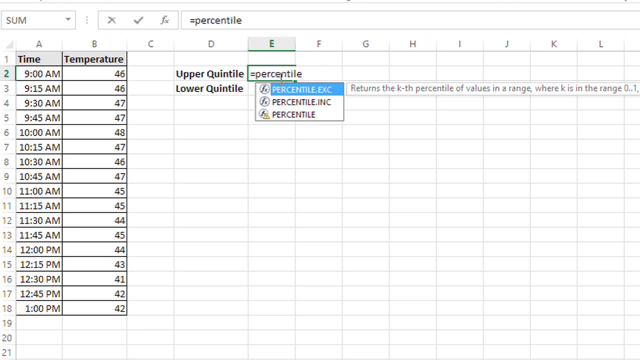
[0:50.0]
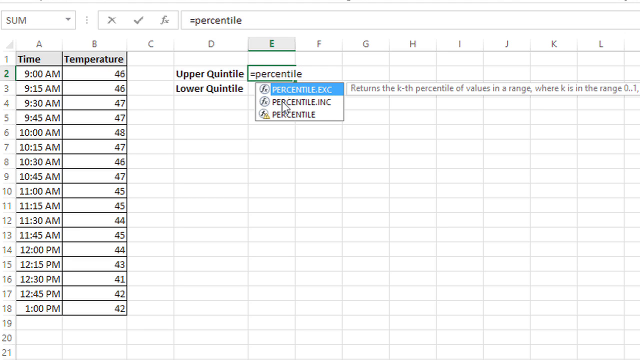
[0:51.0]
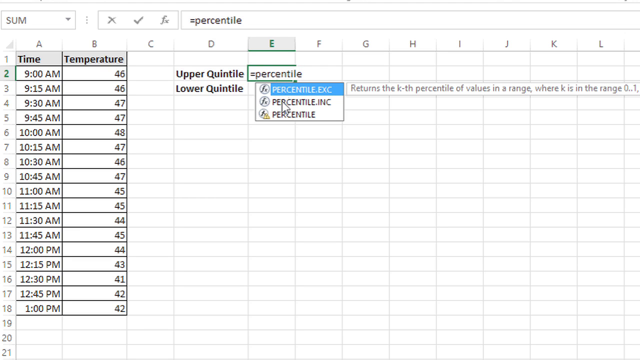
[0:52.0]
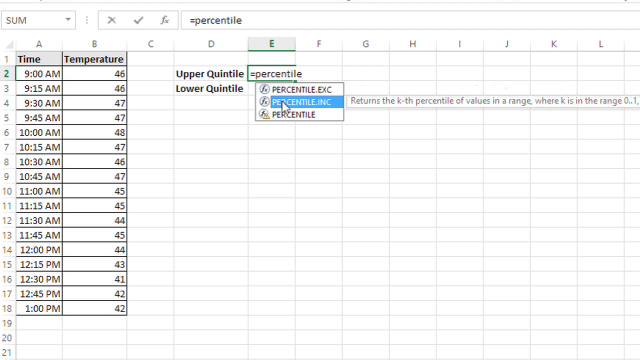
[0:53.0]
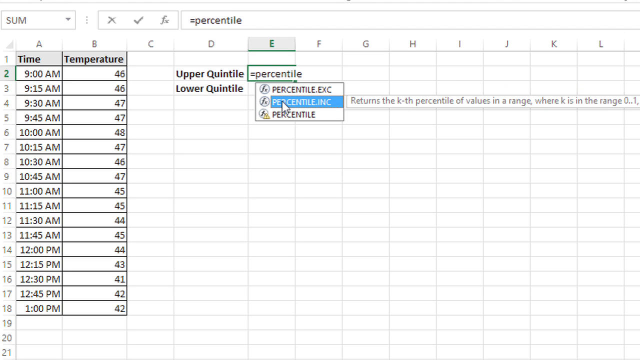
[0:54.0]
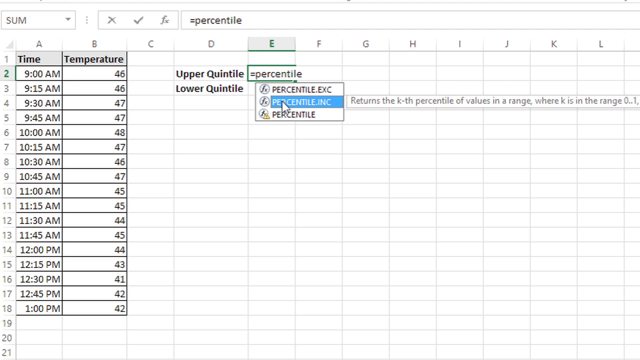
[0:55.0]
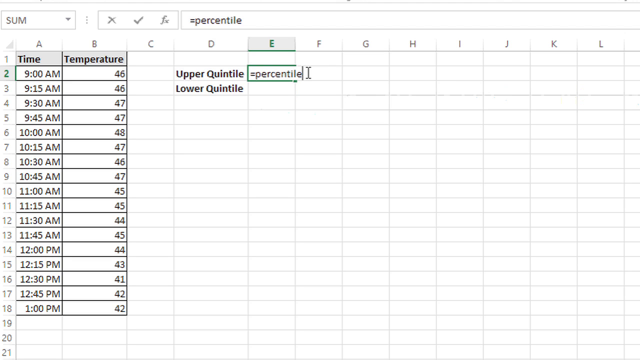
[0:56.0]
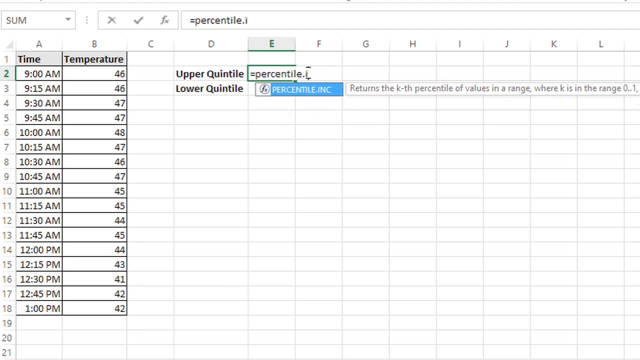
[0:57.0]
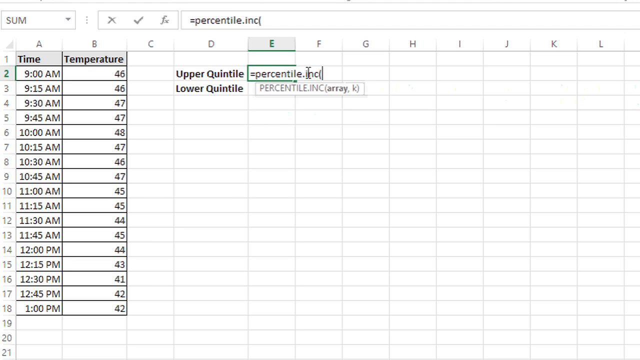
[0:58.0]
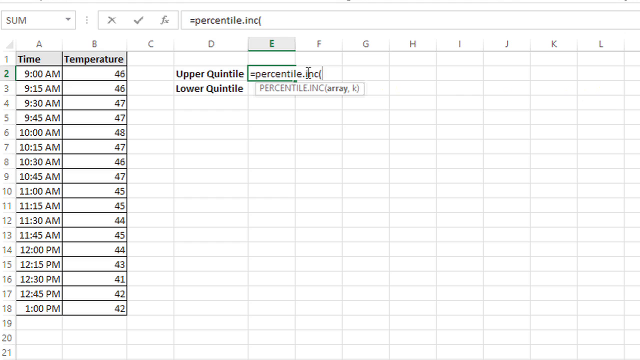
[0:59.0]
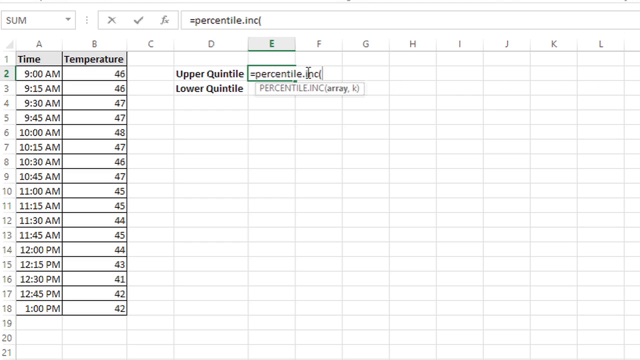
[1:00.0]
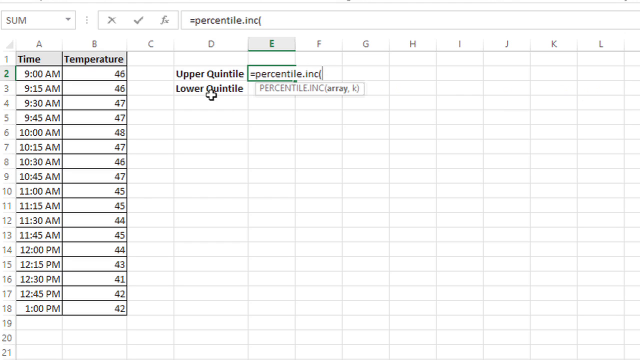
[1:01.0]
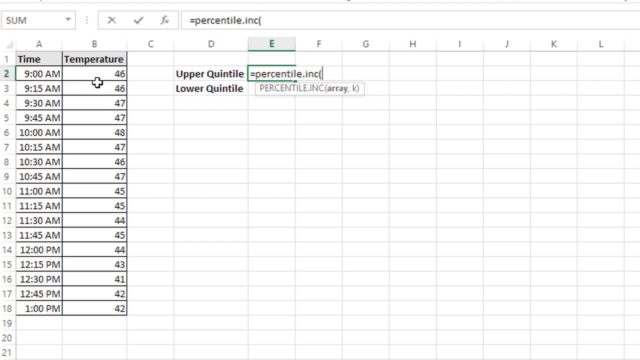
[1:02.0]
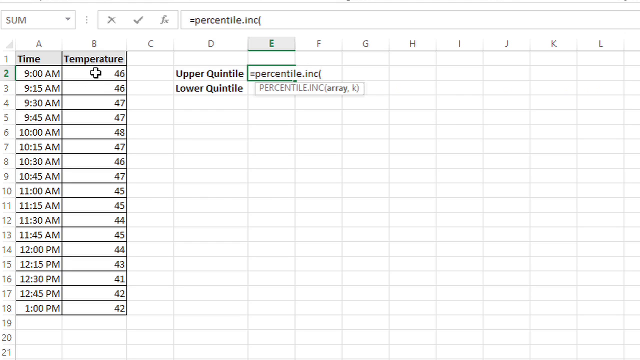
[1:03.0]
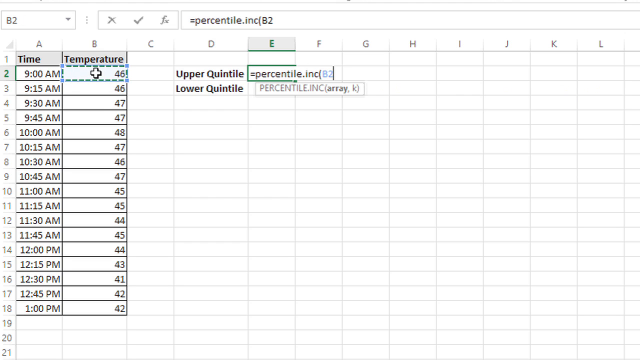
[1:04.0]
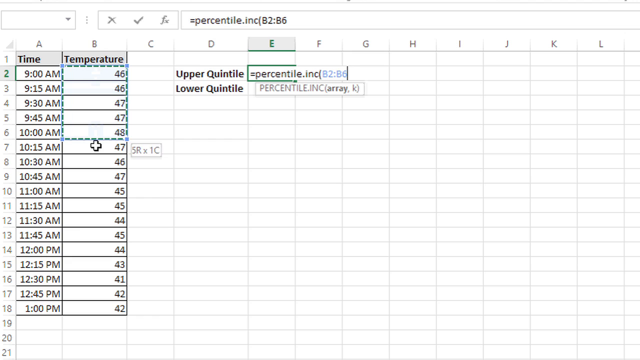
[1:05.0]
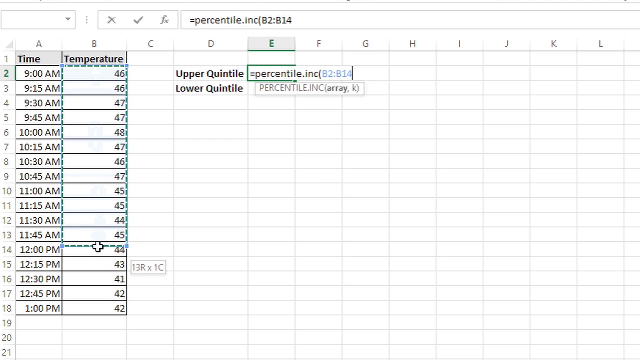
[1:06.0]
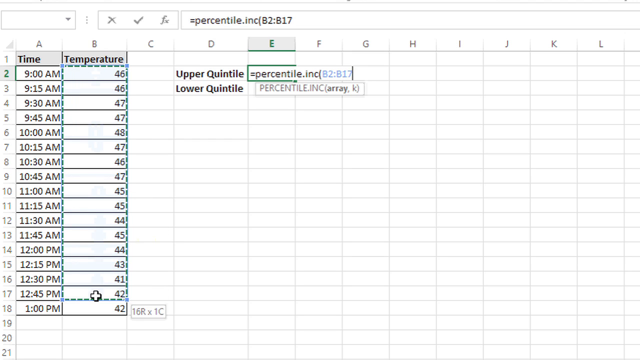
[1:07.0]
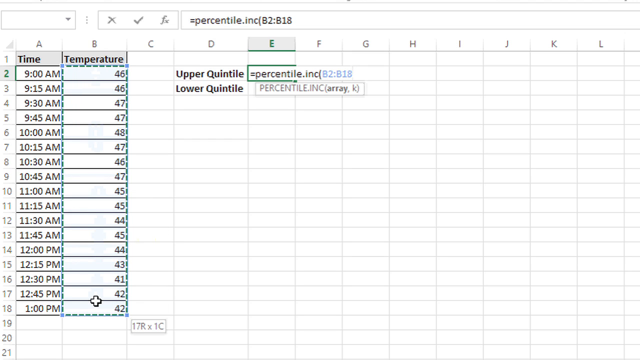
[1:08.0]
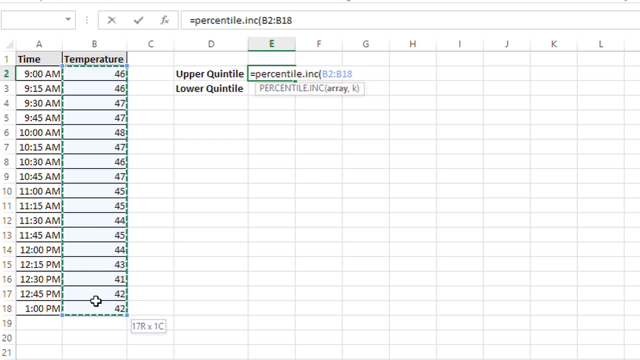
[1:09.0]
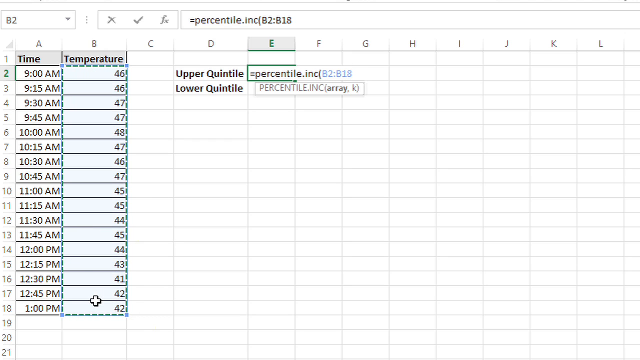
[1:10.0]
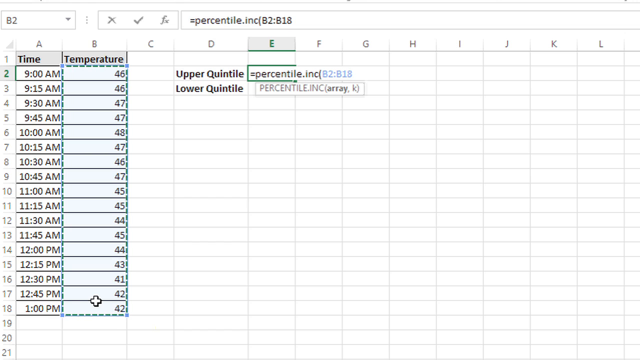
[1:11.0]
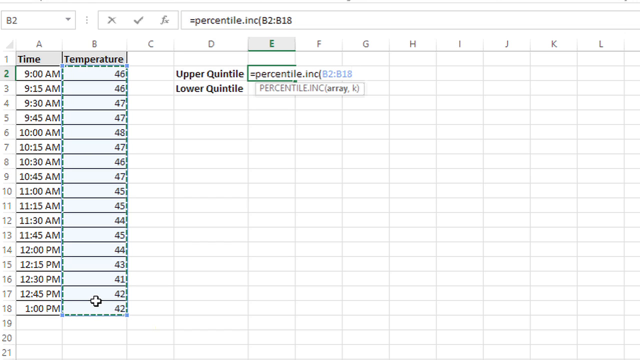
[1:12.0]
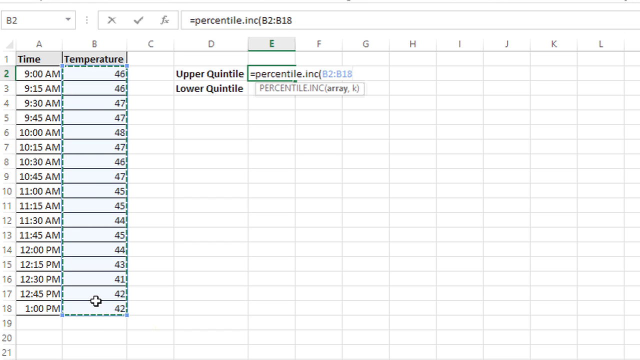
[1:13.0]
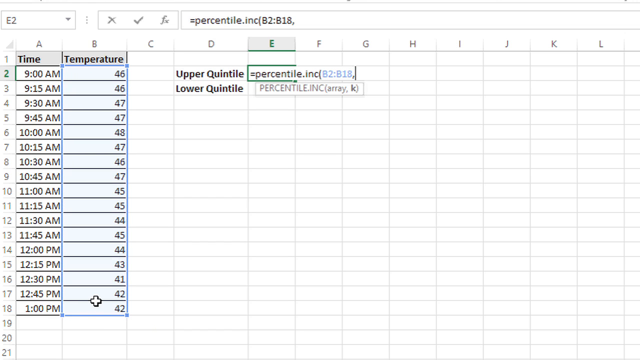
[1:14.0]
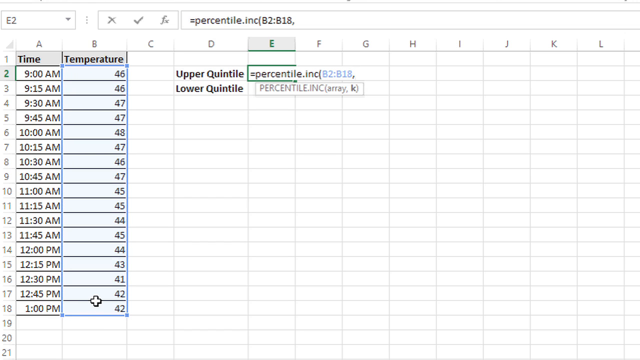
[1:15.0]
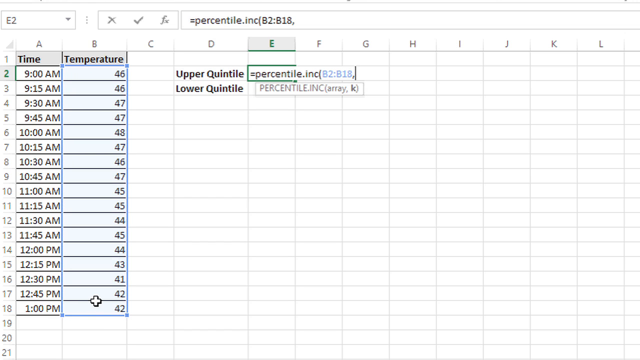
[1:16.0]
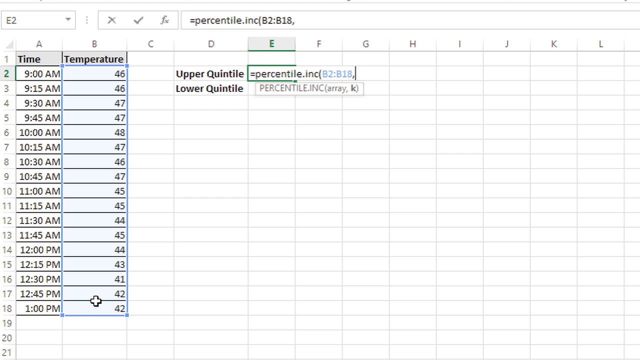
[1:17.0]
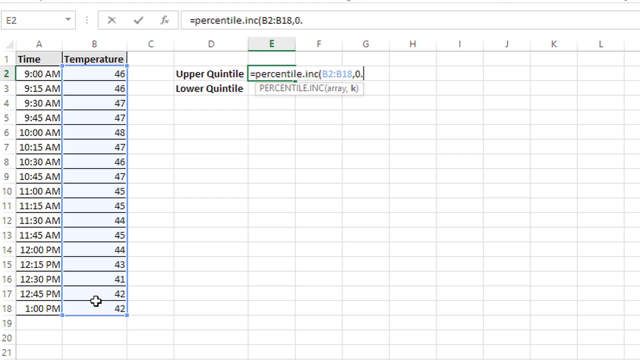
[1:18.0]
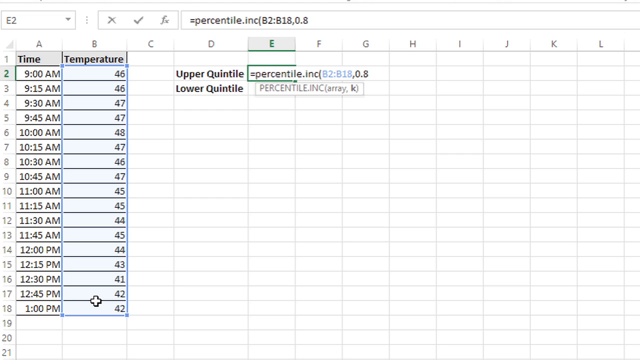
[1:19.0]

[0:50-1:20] In a screen recording of an Excel spreadsheet, column A is labeled "Time," column B is labeled "Temperature," column C is blank, and column D has text reading "Upper Quintile" and "Lower Quintile." The user is typing a formula in column E, row 2, to the right of "Upper Quintile," and has typed "=Percentile." A drop-down suggestion box opens and they mouse over "Percentile.inc," clicking it so it highlights in blue. They continue typing in the cell, adding ".inc" and an open parenthesis, then click row 2 of column B, which holds the number 46, and drag down the column to row 18. This automatically enters "B2:B18" in the formula in E2. They add a comma and type 0.8.